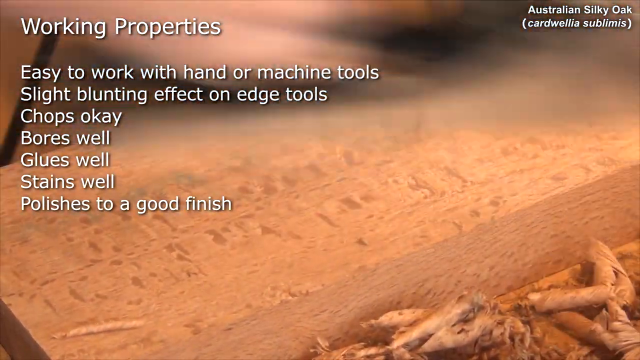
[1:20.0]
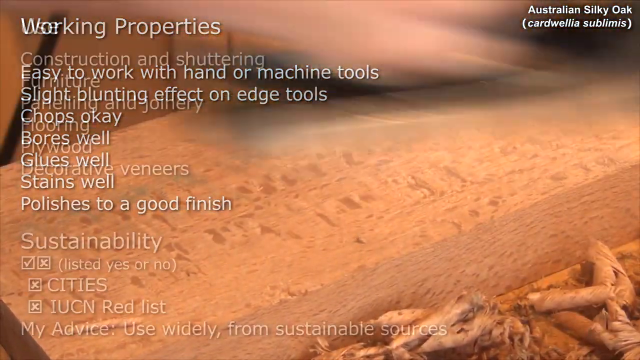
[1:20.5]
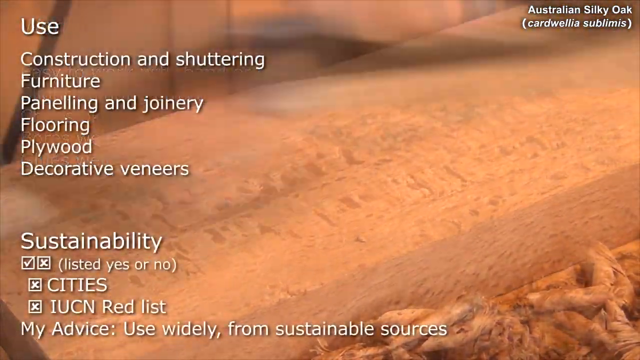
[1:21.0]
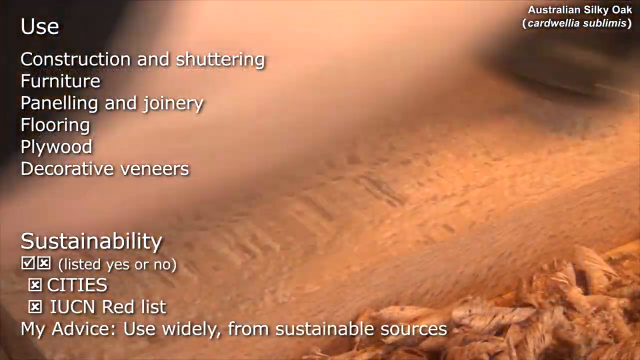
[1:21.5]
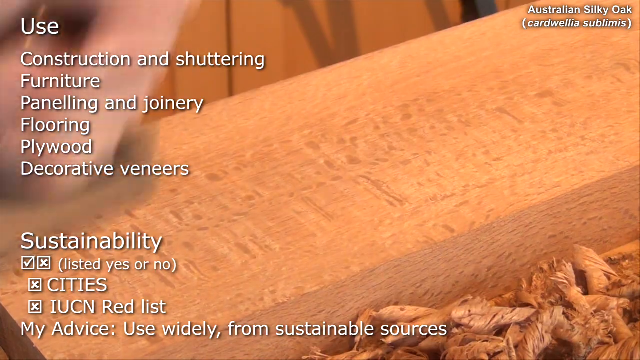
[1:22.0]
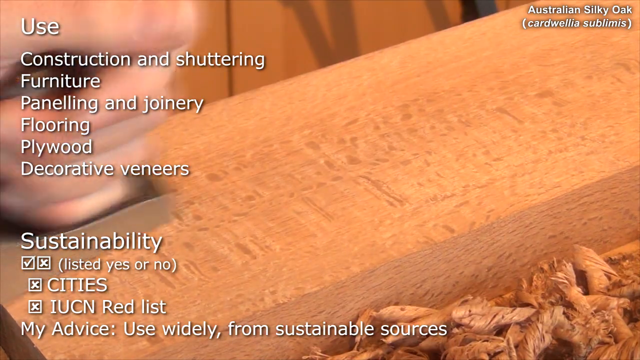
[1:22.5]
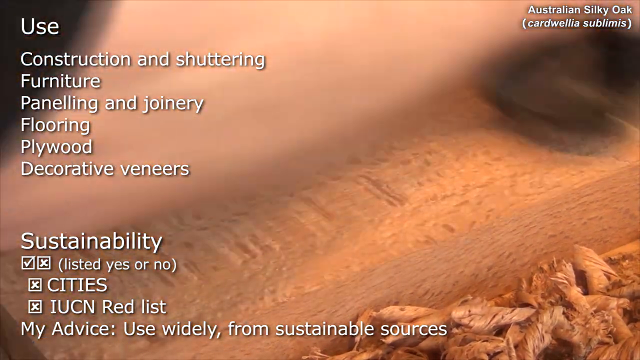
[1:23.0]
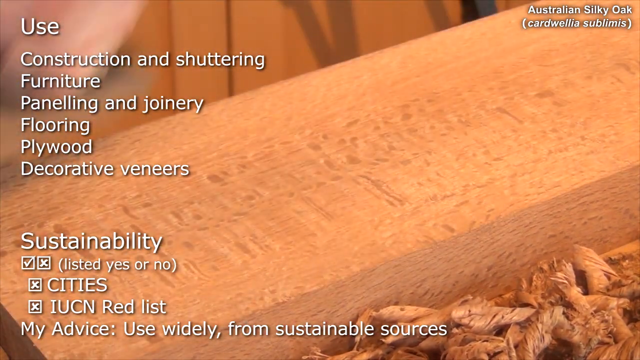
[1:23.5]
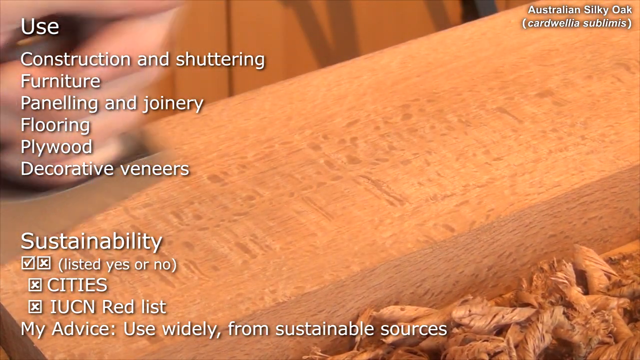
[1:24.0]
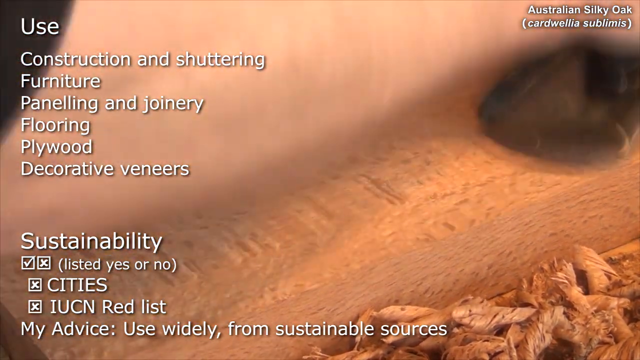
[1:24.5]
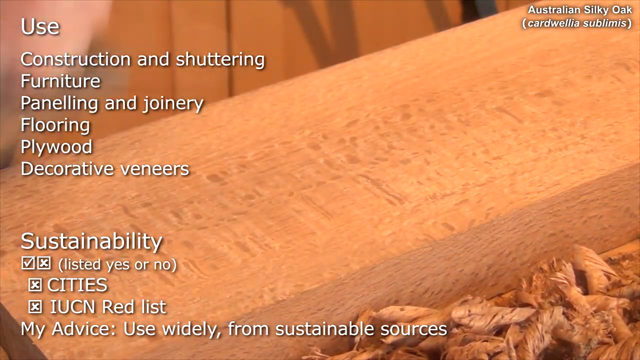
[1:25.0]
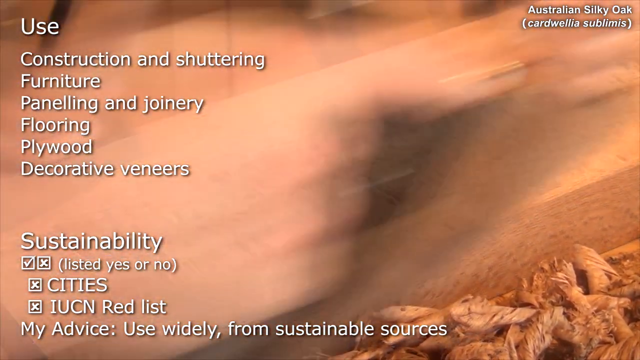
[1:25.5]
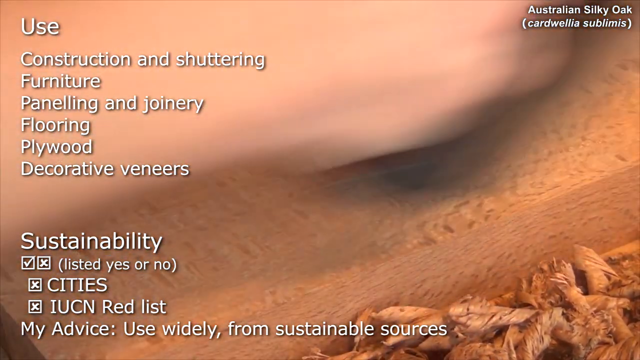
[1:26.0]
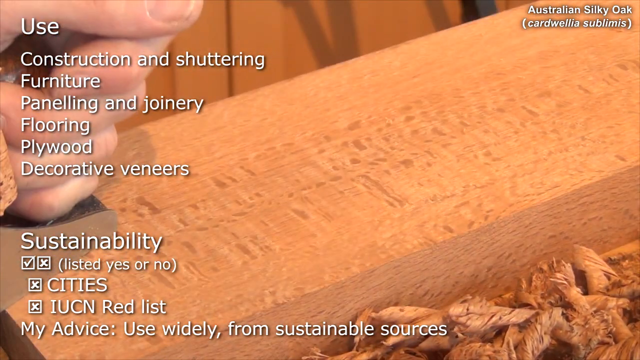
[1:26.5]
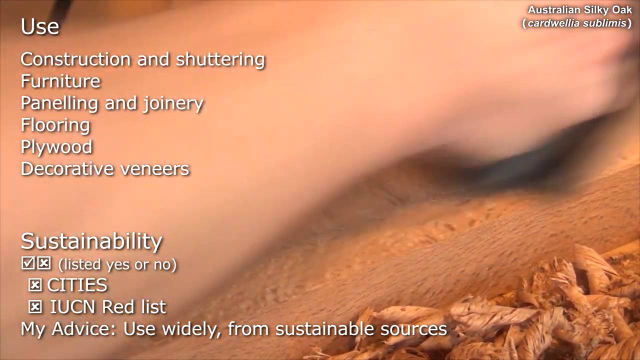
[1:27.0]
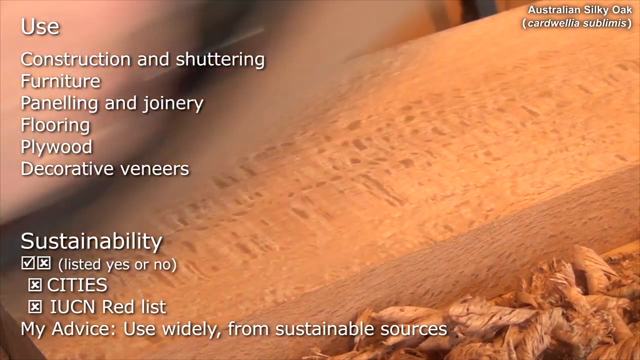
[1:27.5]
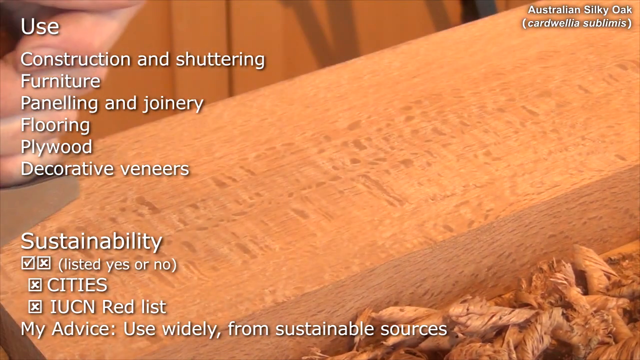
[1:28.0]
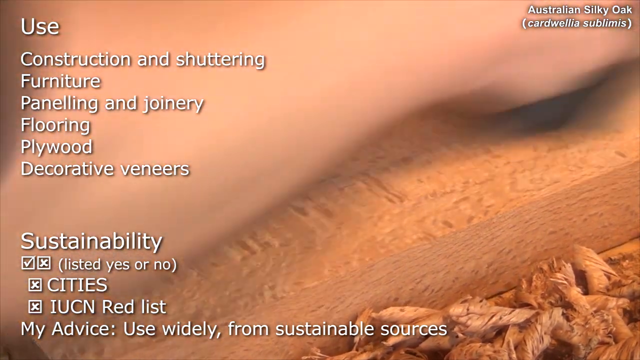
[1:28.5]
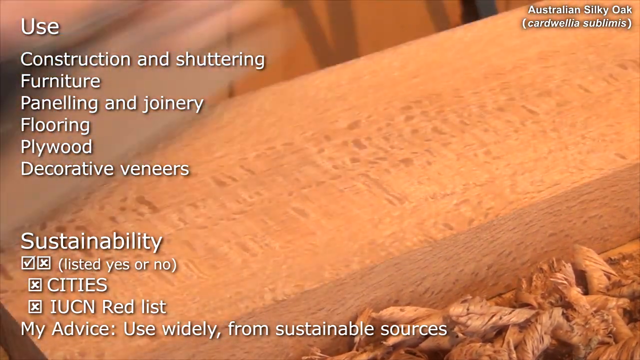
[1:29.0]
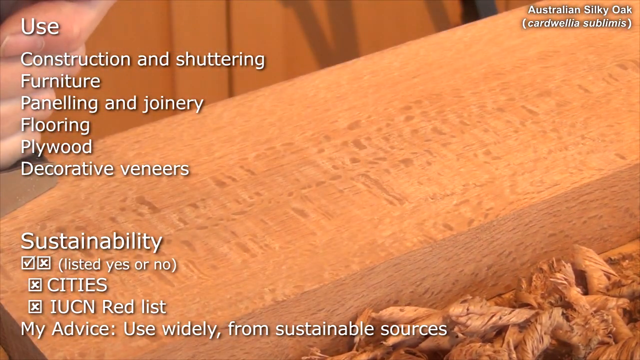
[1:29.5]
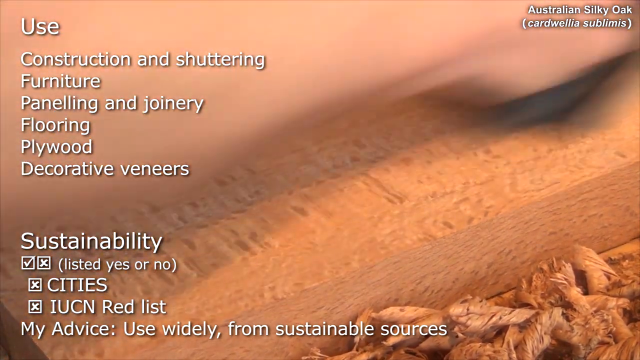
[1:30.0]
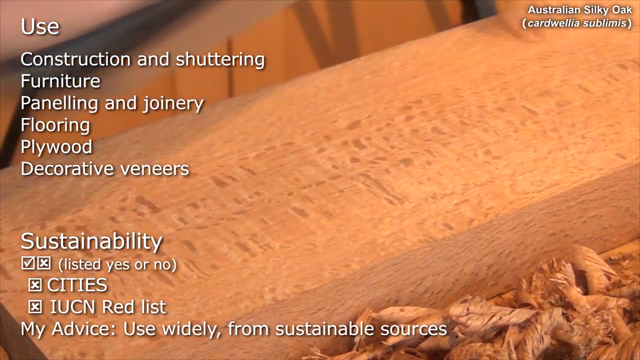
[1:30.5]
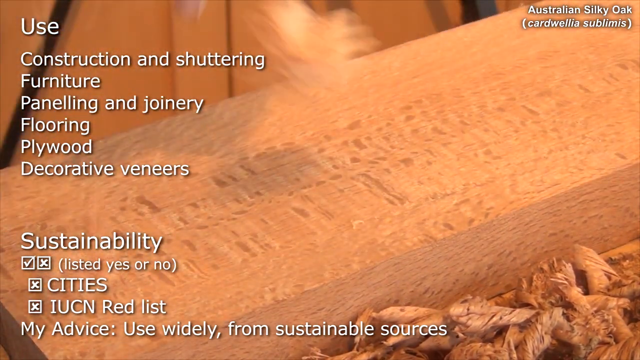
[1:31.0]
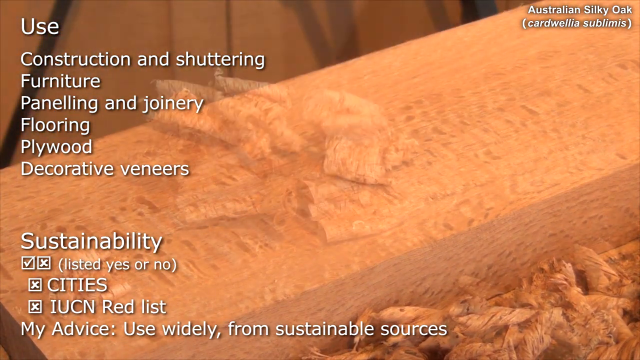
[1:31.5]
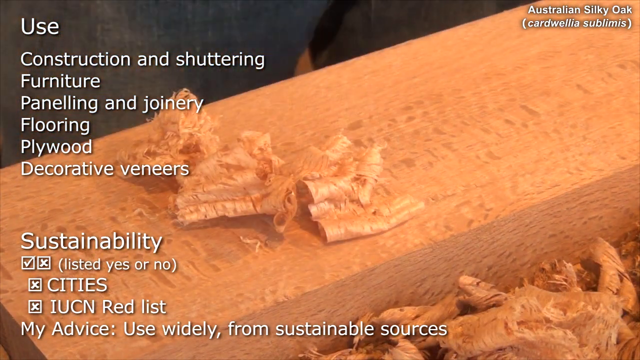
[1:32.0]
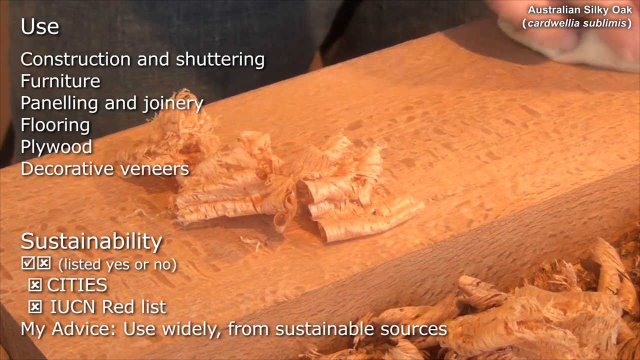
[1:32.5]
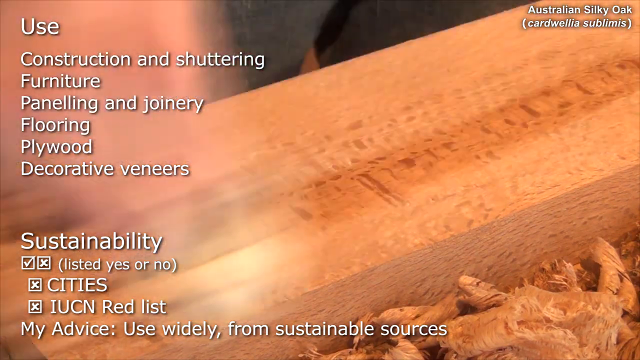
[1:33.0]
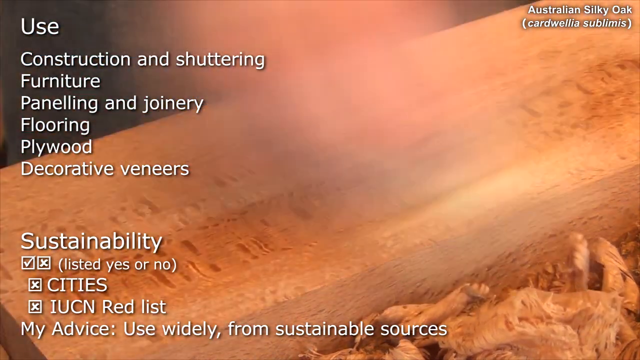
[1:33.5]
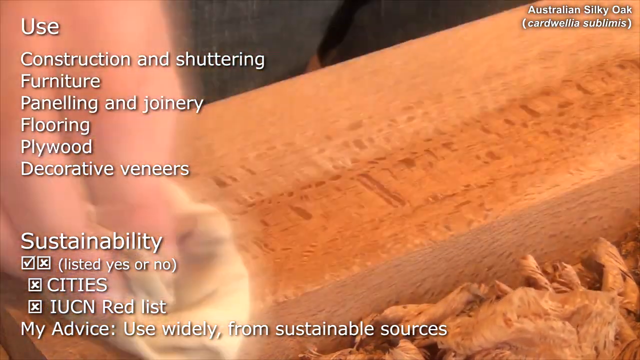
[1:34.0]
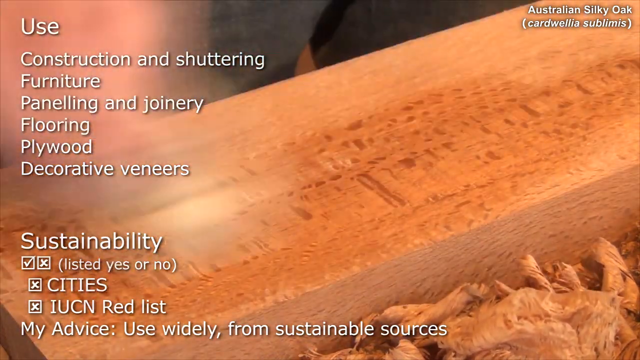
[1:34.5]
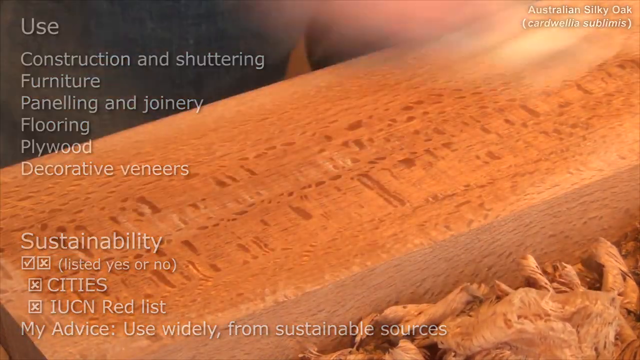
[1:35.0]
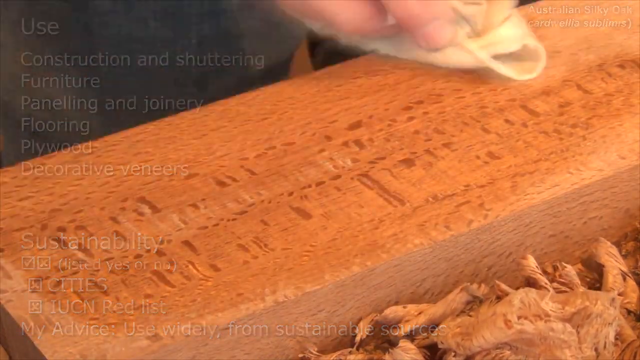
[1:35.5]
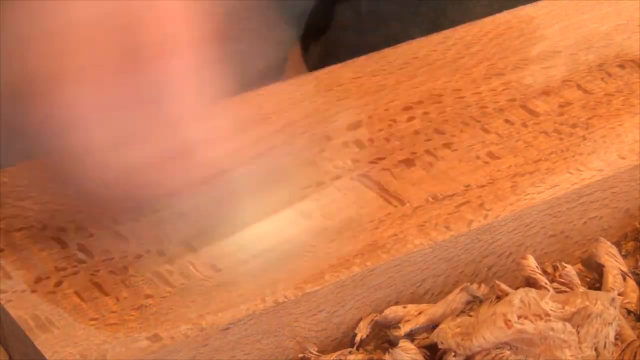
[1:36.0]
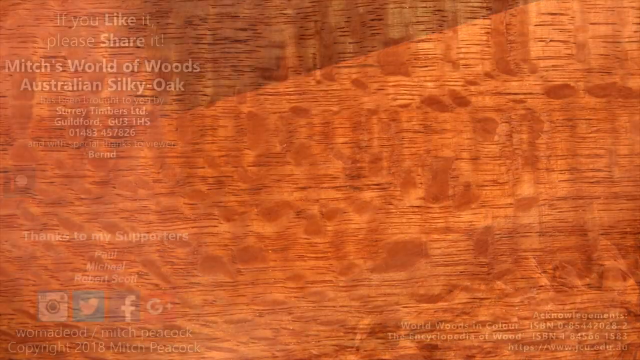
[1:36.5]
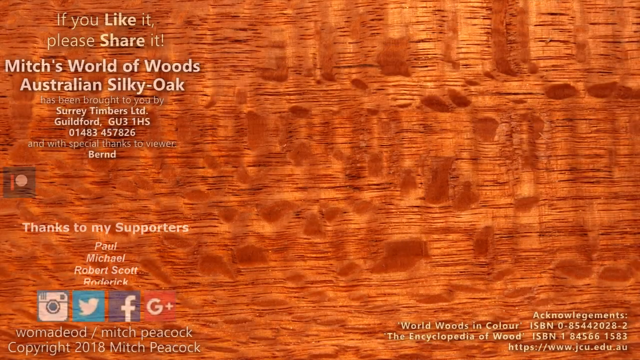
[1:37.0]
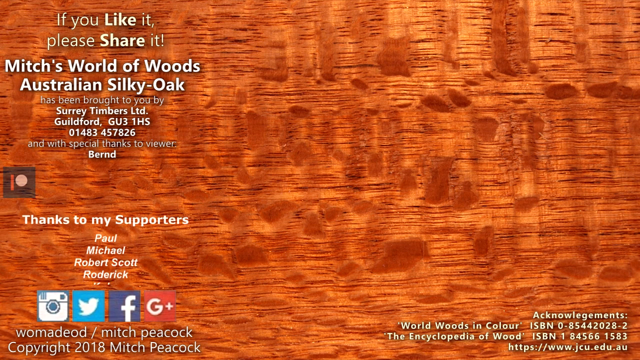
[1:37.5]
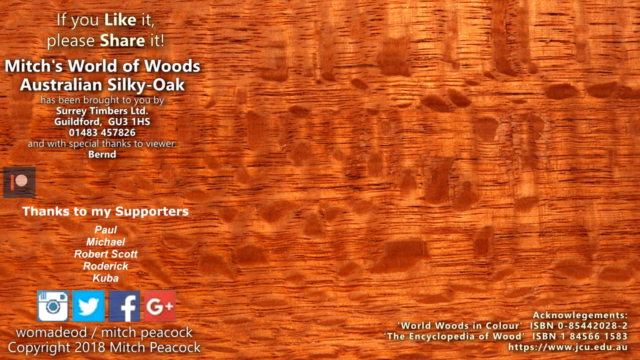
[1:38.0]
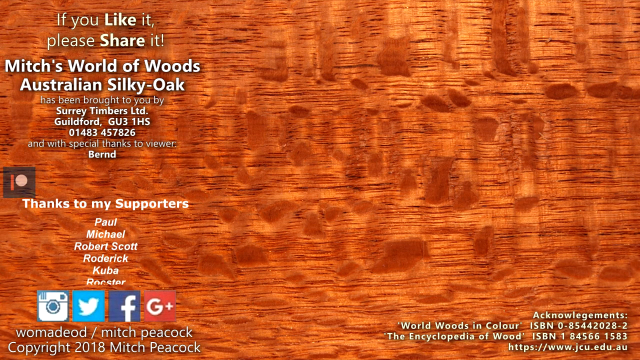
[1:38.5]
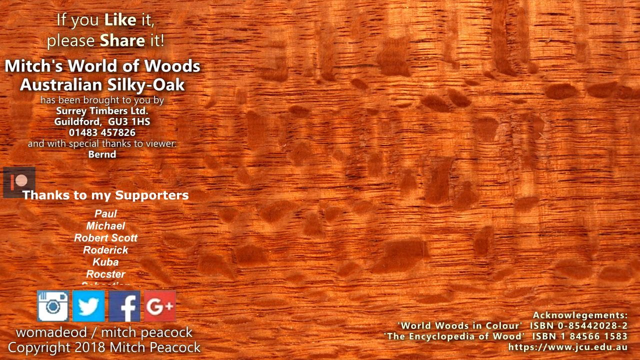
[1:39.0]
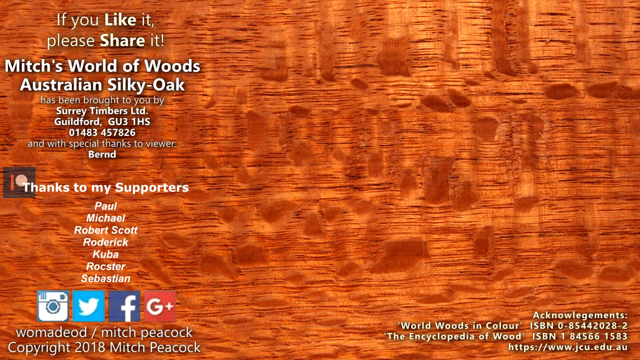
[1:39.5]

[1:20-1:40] A close-up shows a person sanding a rectangular block of wood with a silver handheld device that has a flat metal surface, rubbing it with a good amount of pressure over the flat piece of light brown wood. They start at the bottom, push down and move upwards, repeating the motion over and over, and the video seems to speed up in a time-lapse for a bit. Thin sheets of wood fall off as the person goes up and down the block. In the upper left corner, a list of uses reads "construction and shuttering, furniture, paneling and joinery, flooring, plywood, decorative veneers". In the bottom left corner is a sustainability list with checkboxes: "cities" with a checkbox containing an X, and "IUCN red list" with a checkbox containing a square. Underneath it reads "my advice: use widely from sustainable sources". After the sanding and buffing is finished, the person takes a small white rag that looks wet or has polish on it and rubs it up and down the plank, turning the wood a brighter brown that looks wetter and shiny. The scene then changes to a bright, somewhat shiny brown wood-textured background, with white text on the left reading "if you like it please share it. Mitch's World of Woods Australian Silky Oak", followed by "thanks to my supporters" and a scrolling list of names.